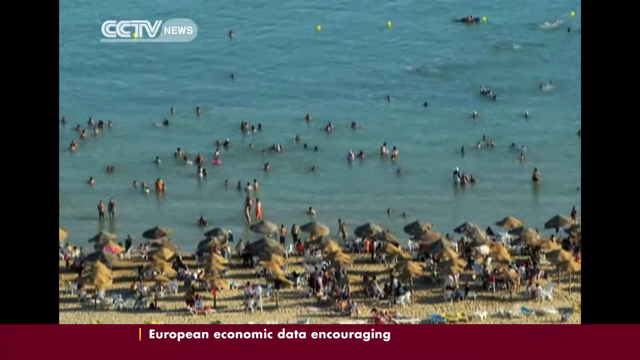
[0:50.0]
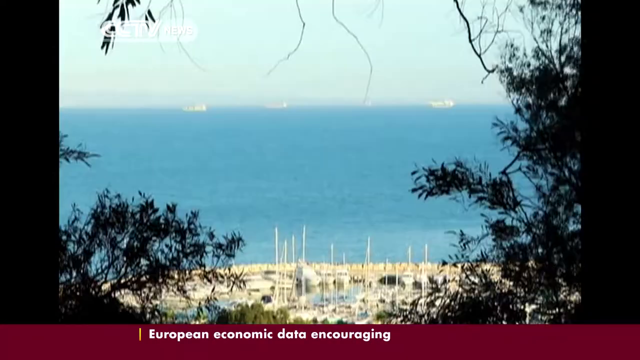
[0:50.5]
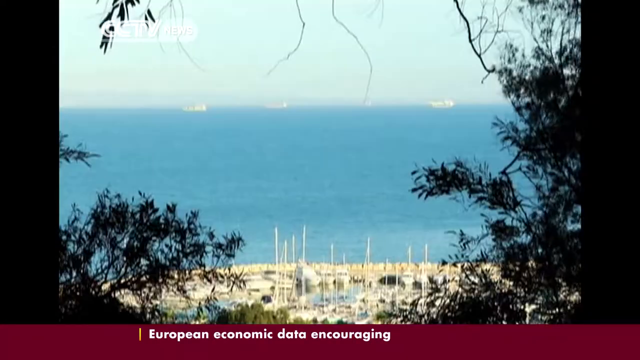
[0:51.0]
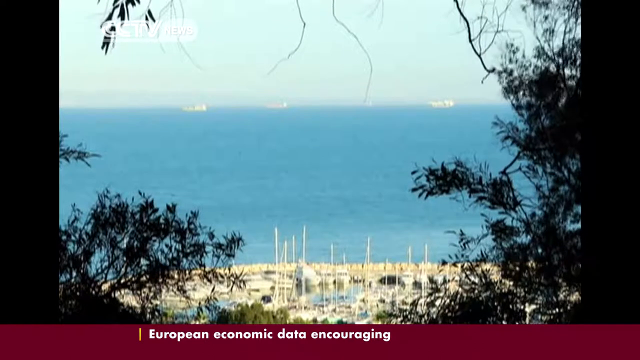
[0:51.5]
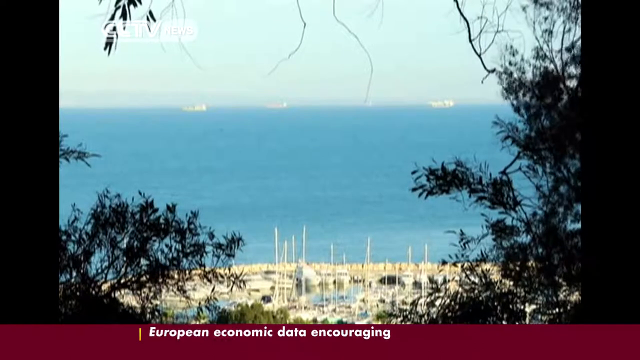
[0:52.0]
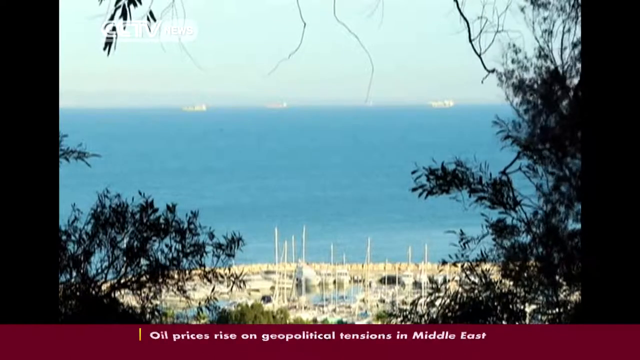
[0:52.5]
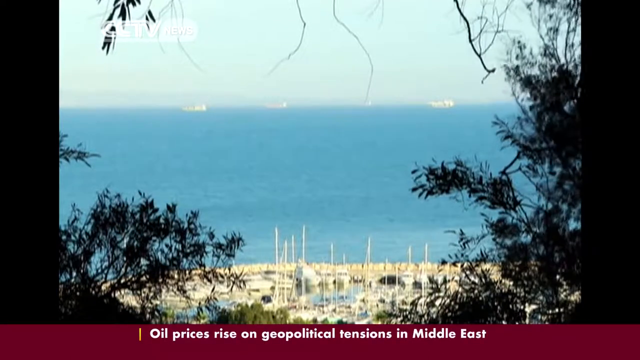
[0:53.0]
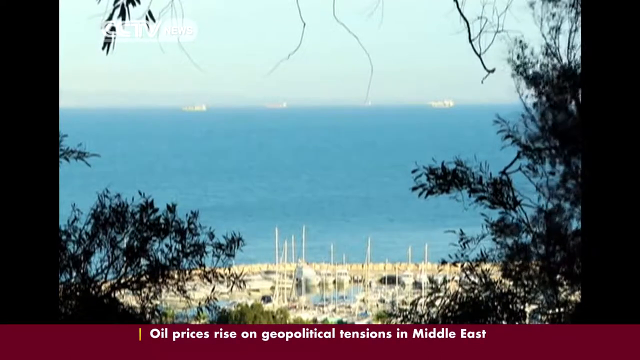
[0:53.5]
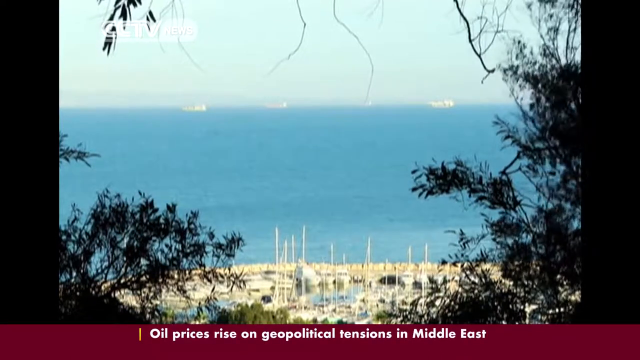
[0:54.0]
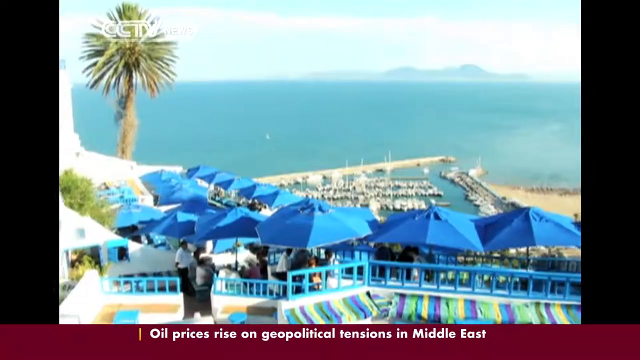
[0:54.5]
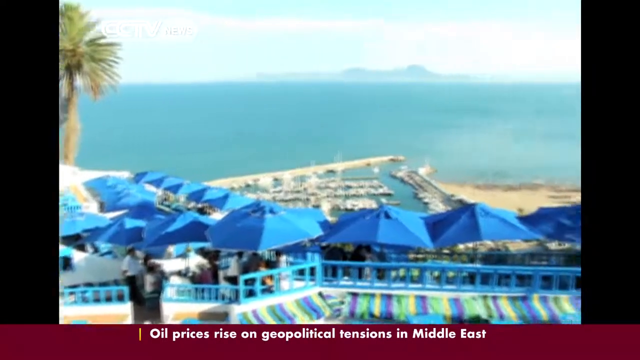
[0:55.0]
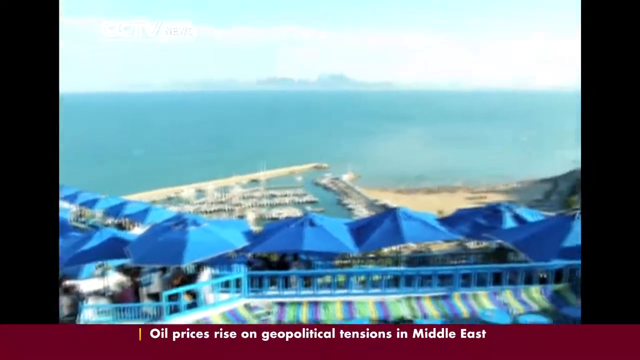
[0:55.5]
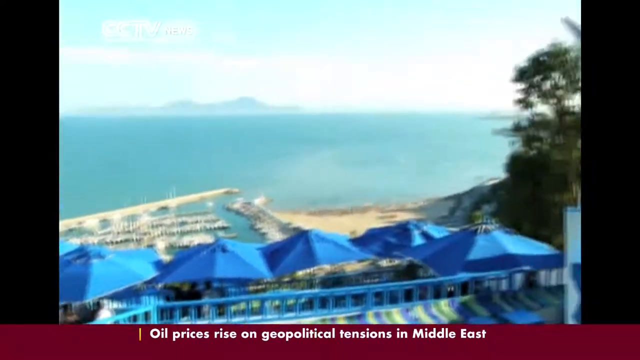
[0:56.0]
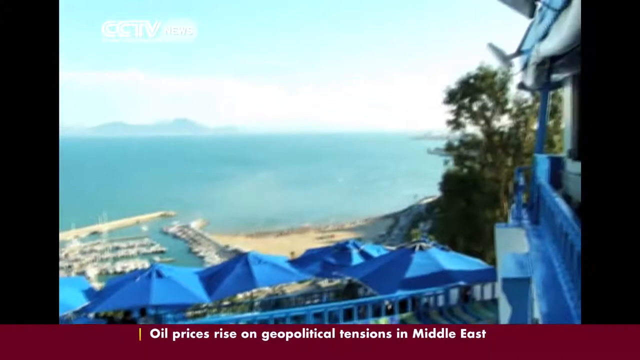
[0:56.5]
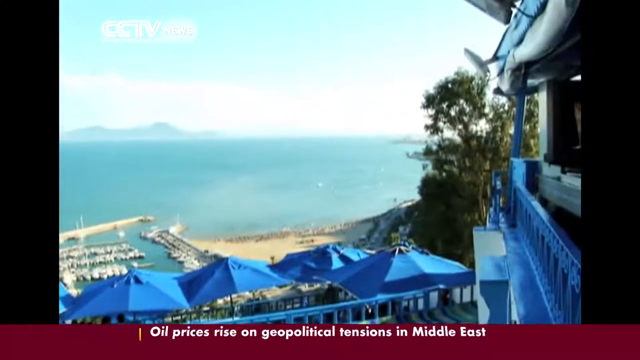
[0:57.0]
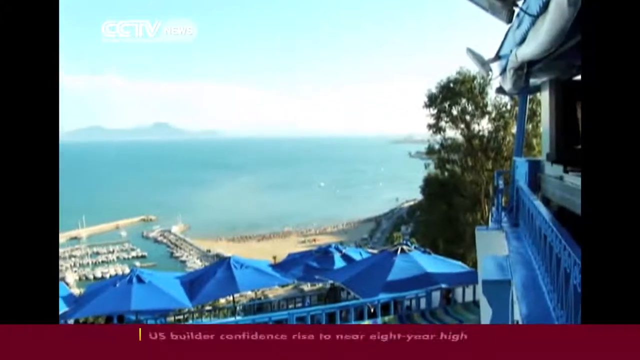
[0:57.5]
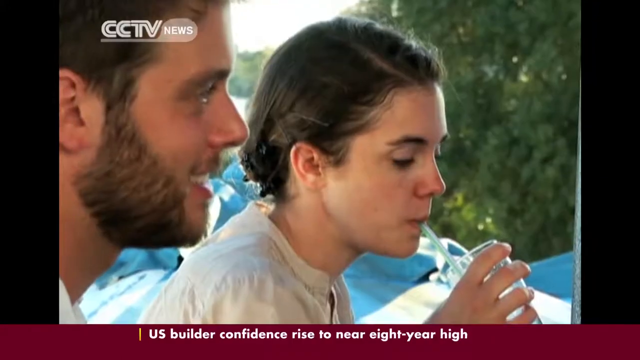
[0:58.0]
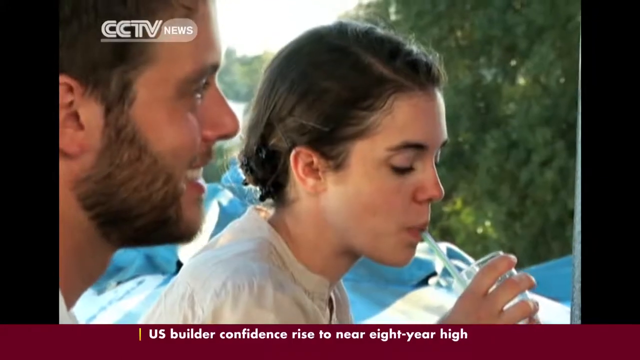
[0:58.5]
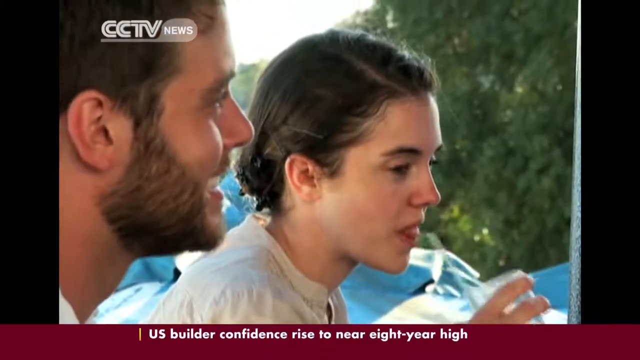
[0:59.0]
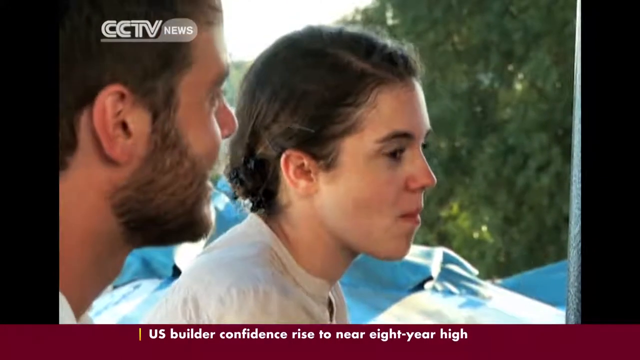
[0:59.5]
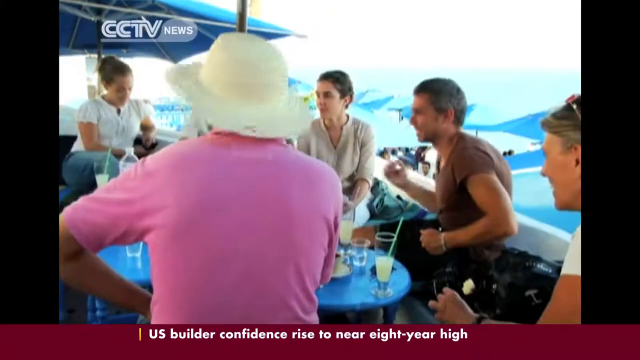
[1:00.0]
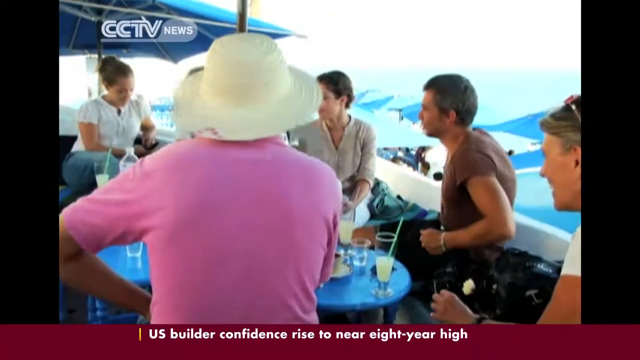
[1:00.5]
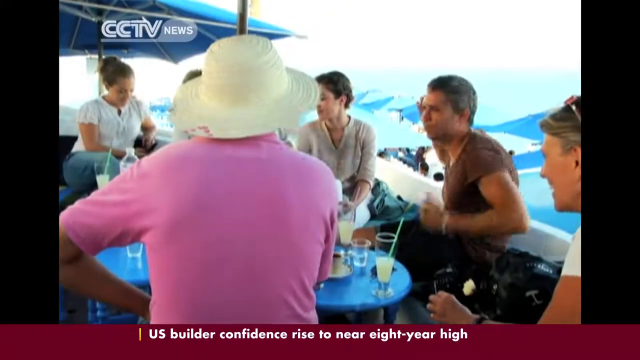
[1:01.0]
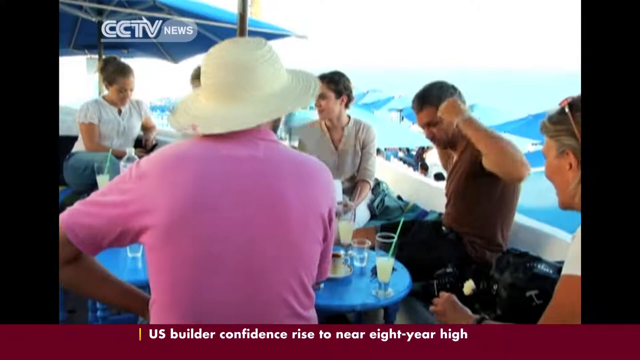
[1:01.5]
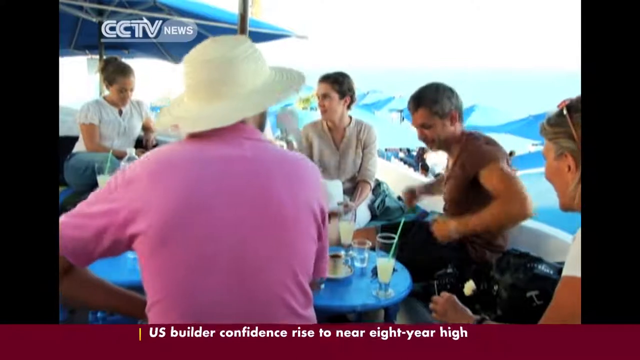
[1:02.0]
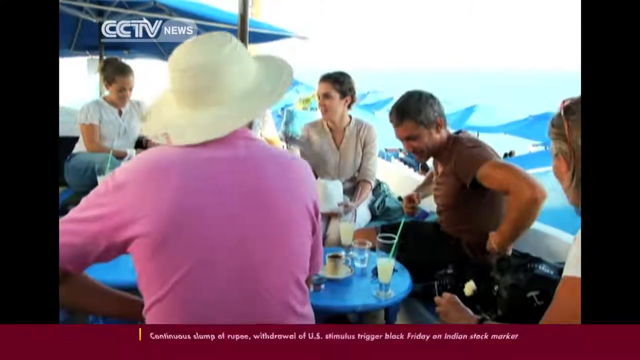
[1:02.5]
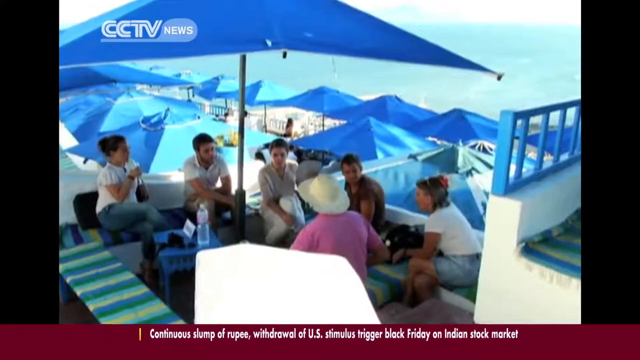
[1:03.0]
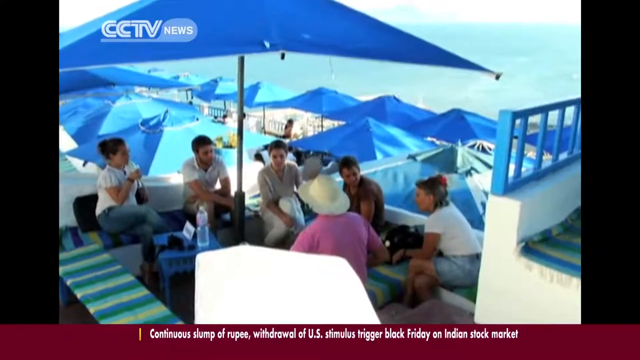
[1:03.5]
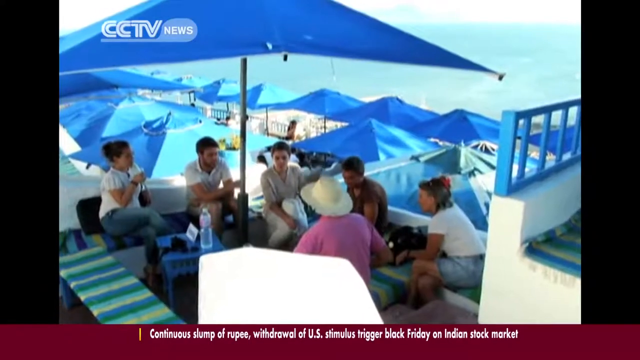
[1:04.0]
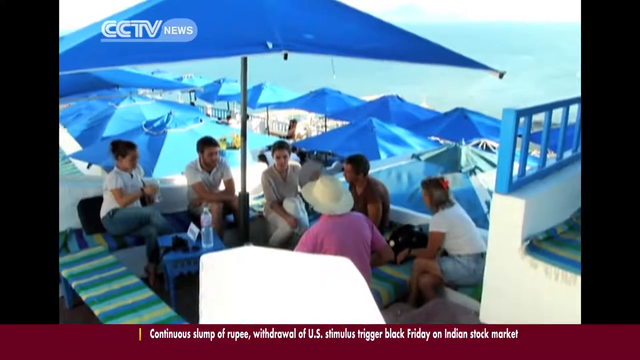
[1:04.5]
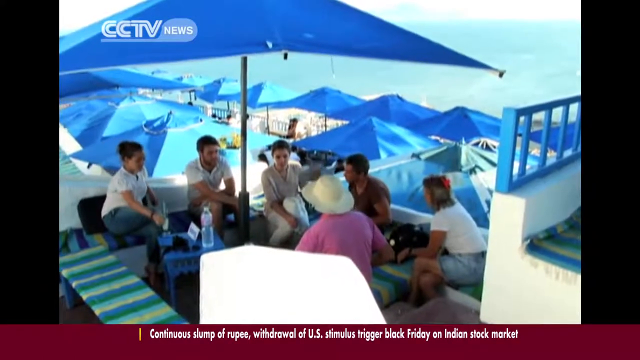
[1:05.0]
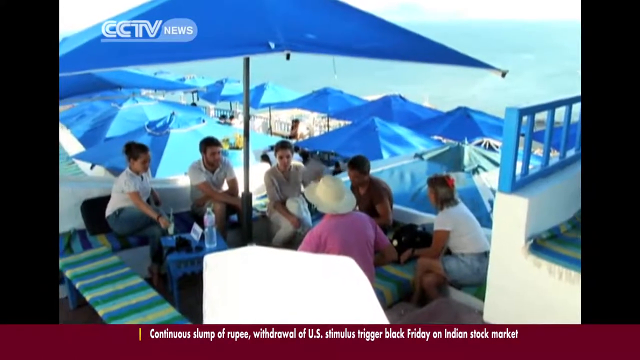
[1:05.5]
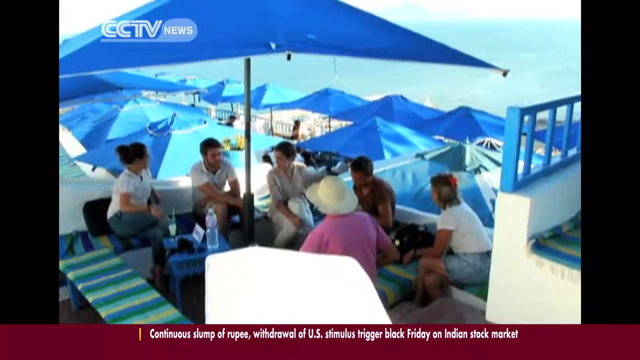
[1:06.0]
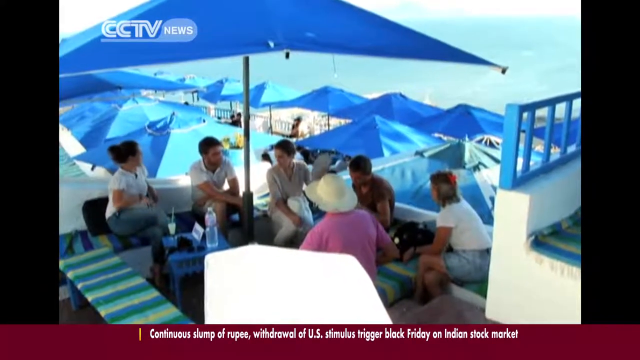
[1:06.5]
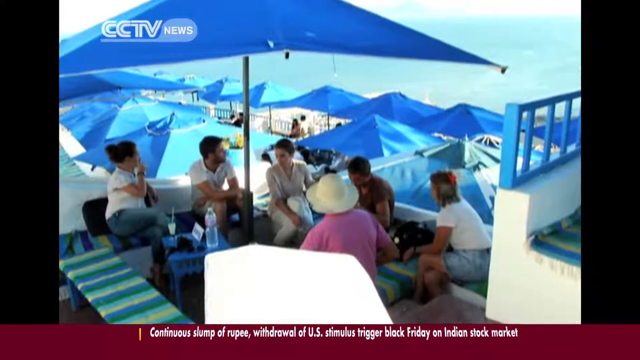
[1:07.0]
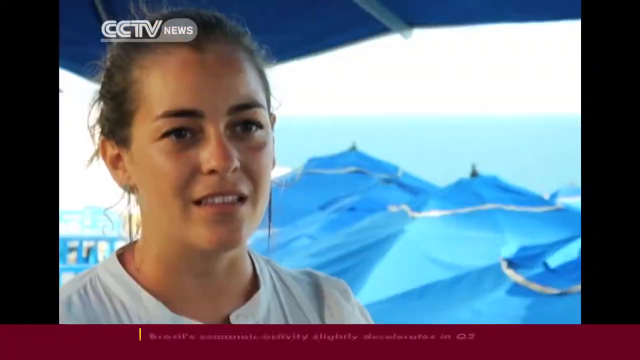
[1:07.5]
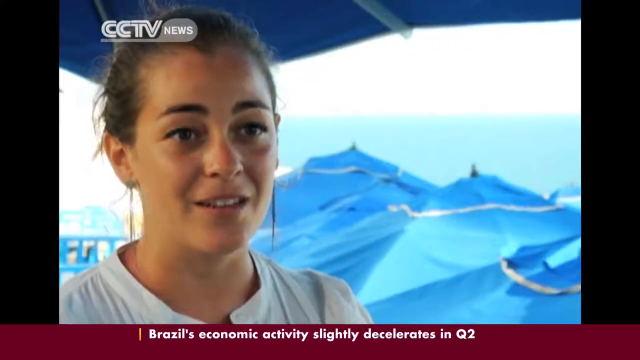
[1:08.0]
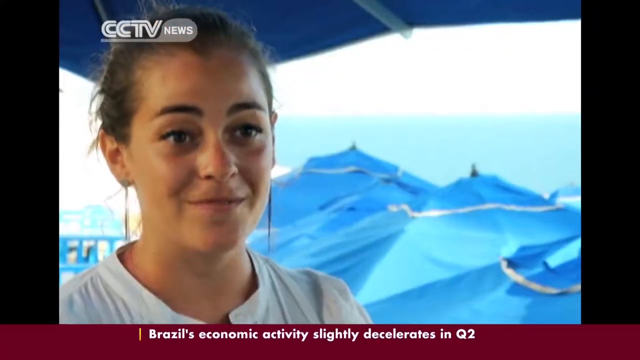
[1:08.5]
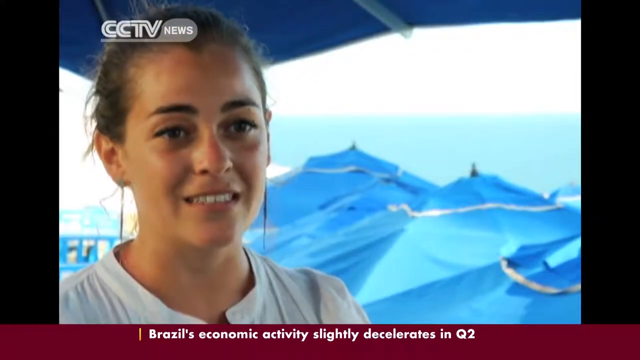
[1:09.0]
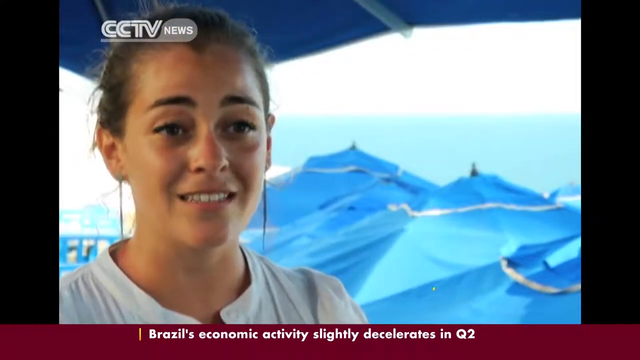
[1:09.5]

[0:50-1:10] A picturesque beach location appears on a very hot-looking summer's day. From a distance, people are visible on the beach and boats in a small harbor. The camera pans from left to right across lots of blue umbrellas at a resort above the beach area. The shot cuts to a group of what appear to be visiting tourists, white and not resembling the local vendors, sitting at a table by the blue umbrellas. Six people sit there drinking, talking to each other and looking happy; one of them fans themselves. In one static shot, they appear to be giving their opinions to an unseen camera person.